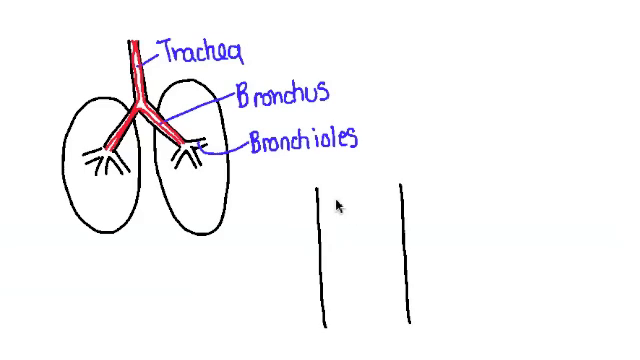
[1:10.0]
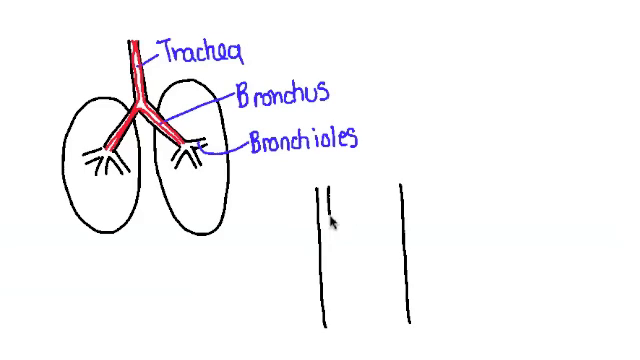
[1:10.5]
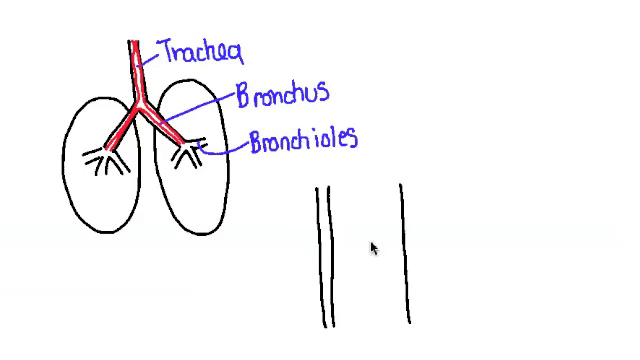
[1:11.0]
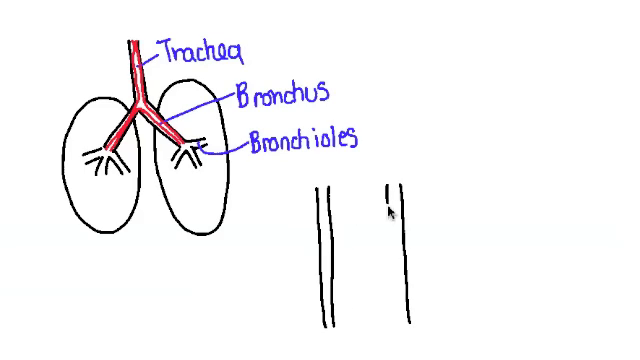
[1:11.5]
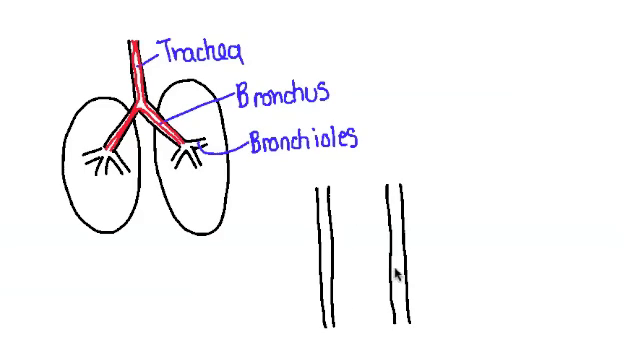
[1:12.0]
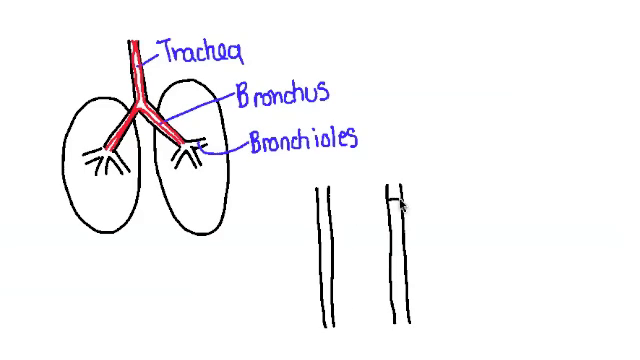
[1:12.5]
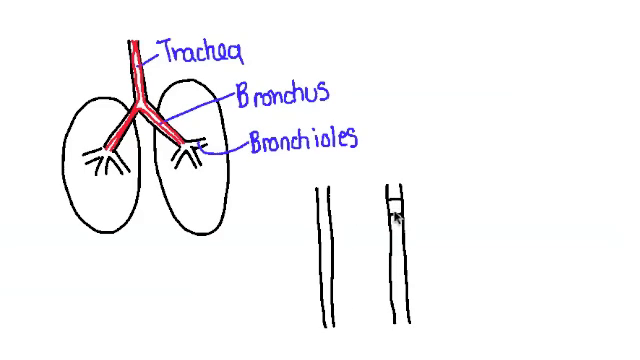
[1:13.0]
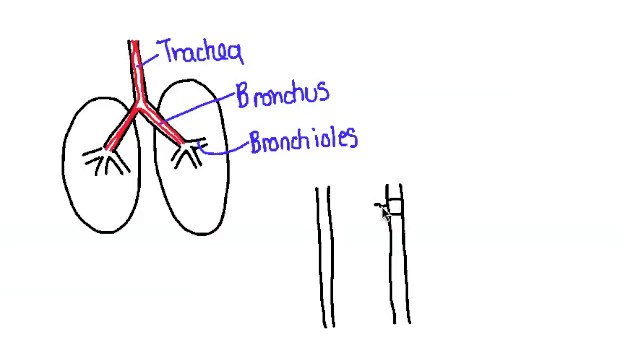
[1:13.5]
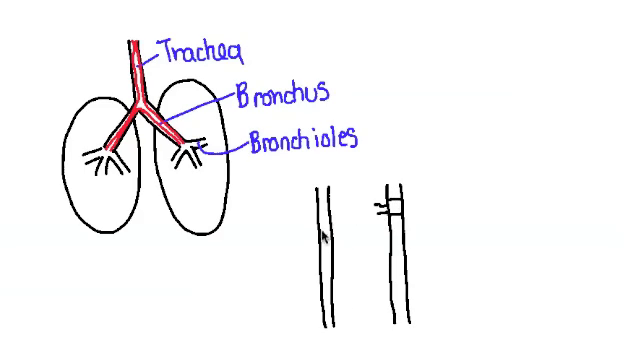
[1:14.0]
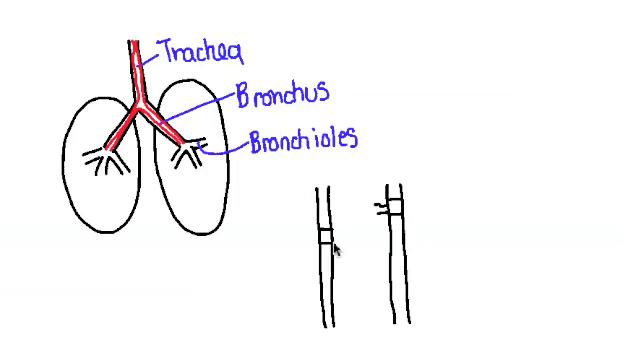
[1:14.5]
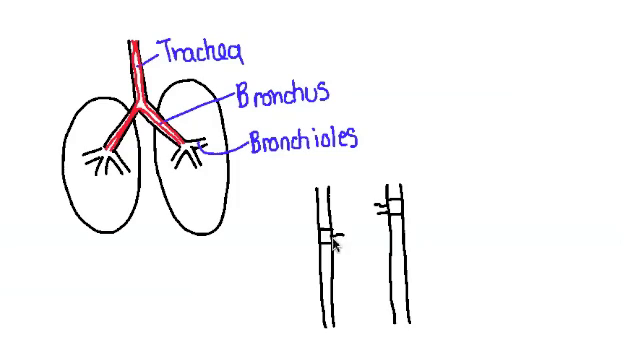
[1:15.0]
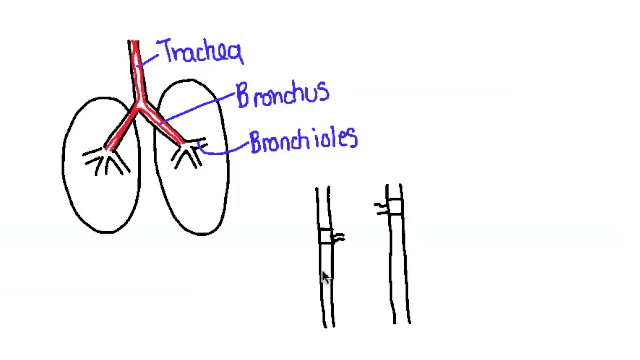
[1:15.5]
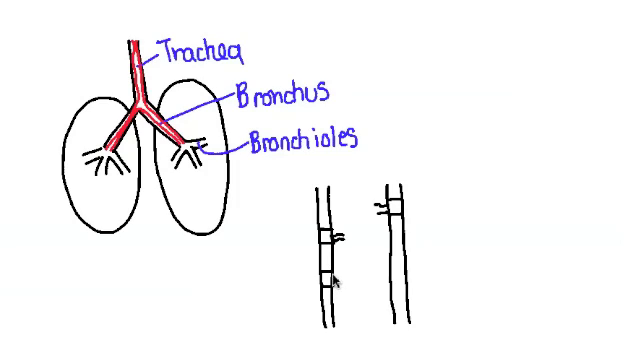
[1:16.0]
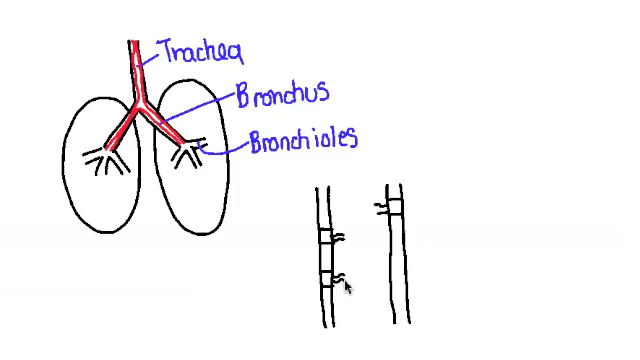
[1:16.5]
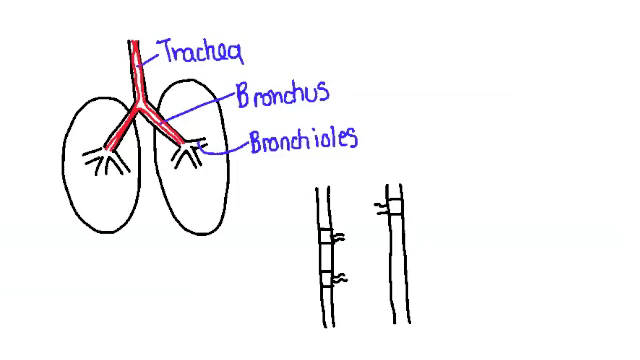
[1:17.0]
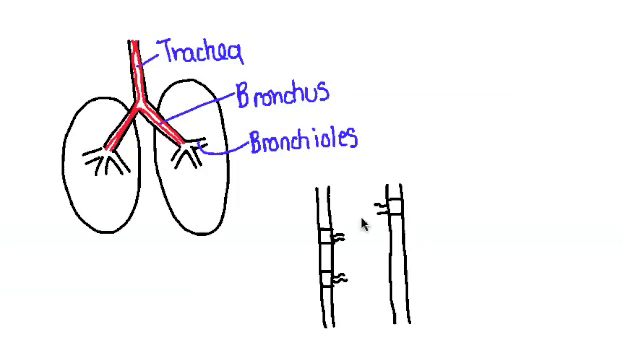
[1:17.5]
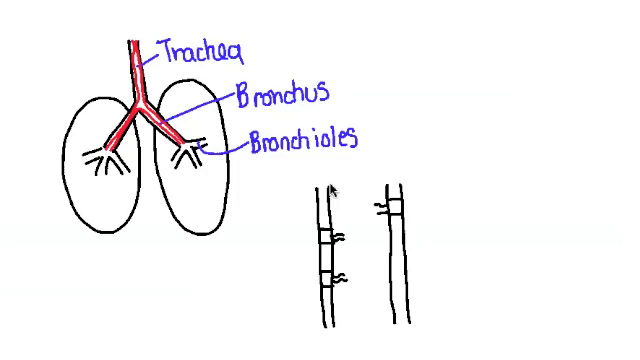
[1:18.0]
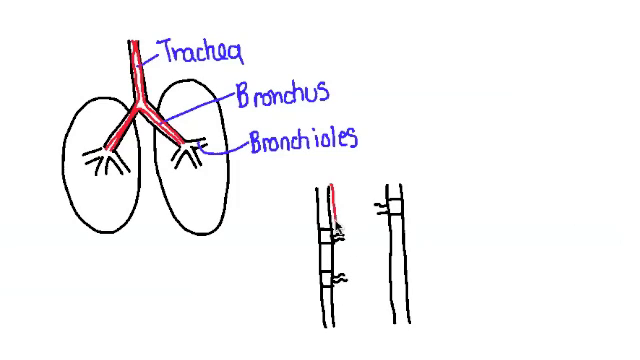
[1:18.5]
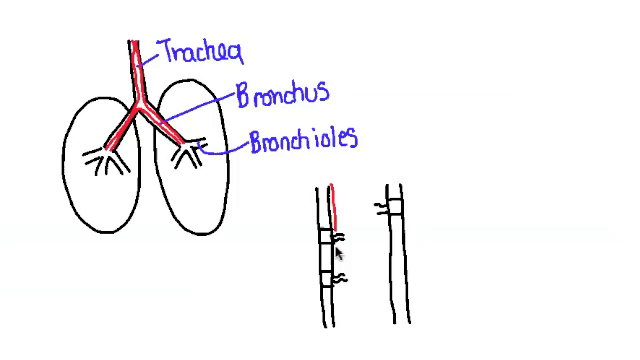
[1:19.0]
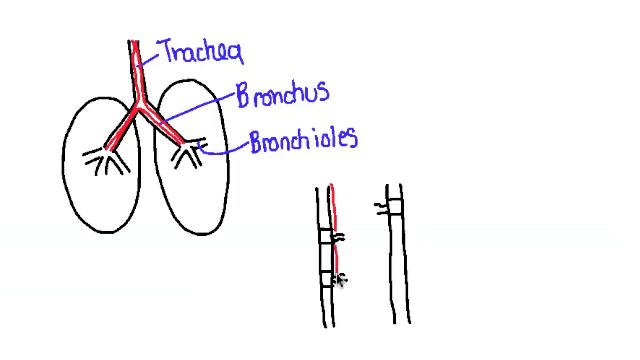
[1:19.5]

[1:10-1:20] The drawing continues with two more parallel lines added, with lines in between them, much like a ladder. Squiggly lines come out from each line in the center of the image, and red lines connect them. These lines could possibly represent a cross-section of the bronchi, or possibly a mucous membrane. The background remains white, and the image labeled with trachea, bronchus and bronchioles of the lungs is still on the left side of the screen.